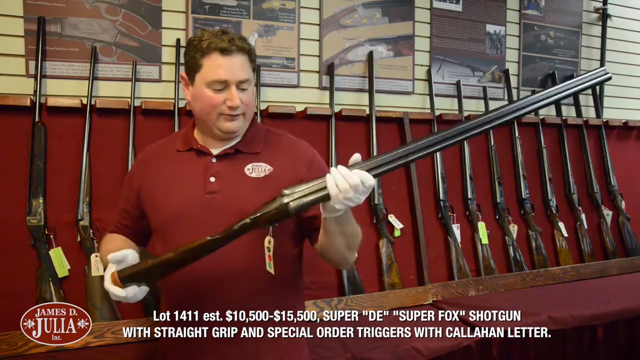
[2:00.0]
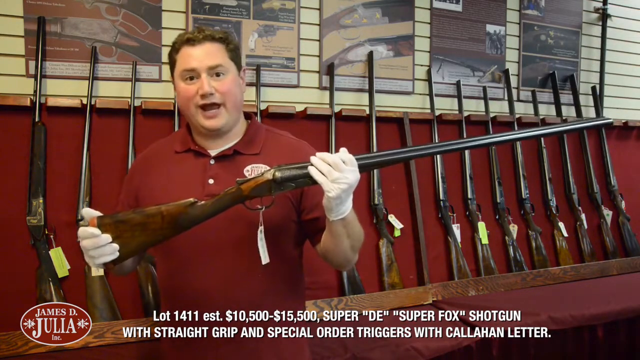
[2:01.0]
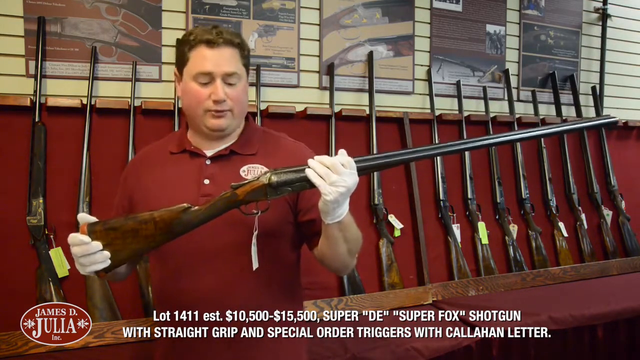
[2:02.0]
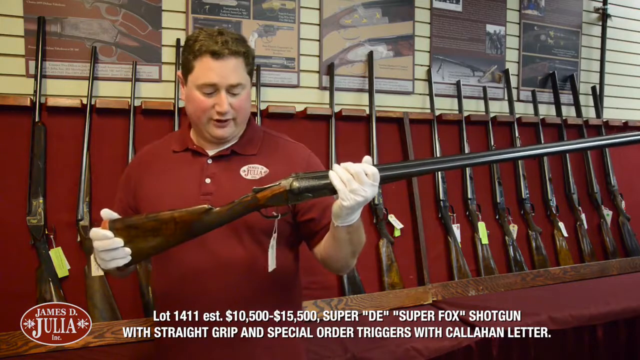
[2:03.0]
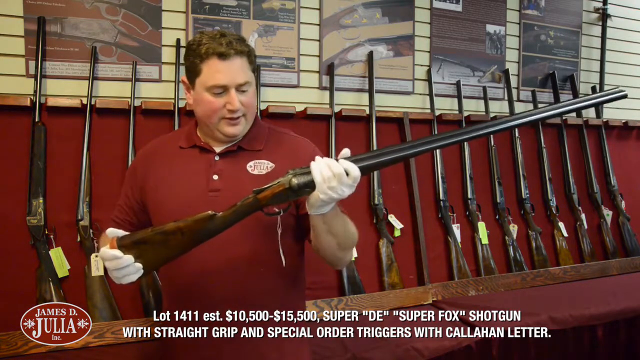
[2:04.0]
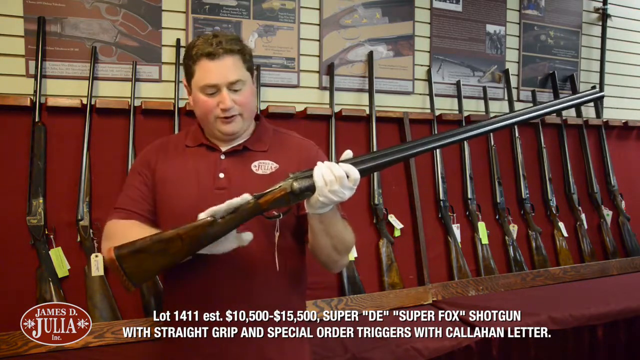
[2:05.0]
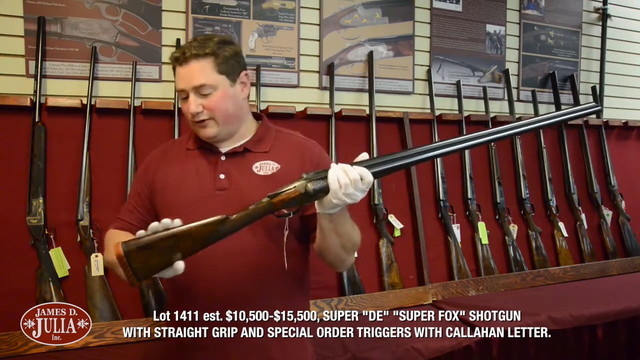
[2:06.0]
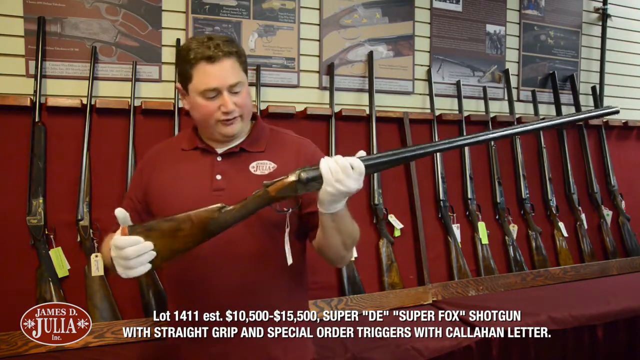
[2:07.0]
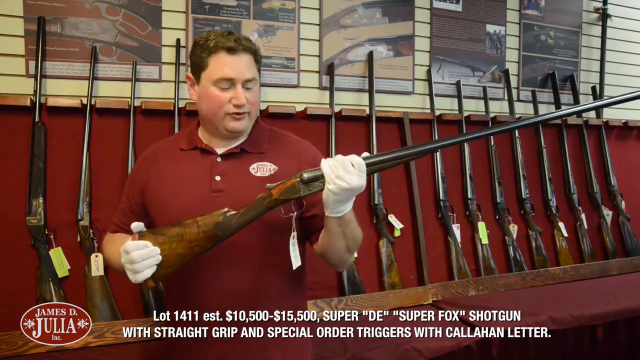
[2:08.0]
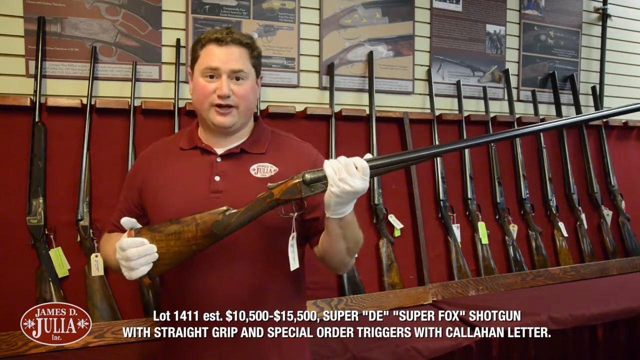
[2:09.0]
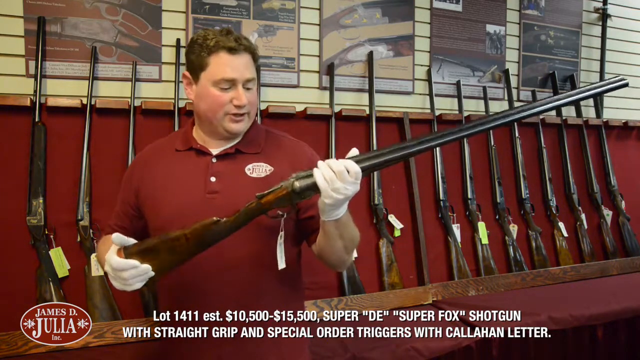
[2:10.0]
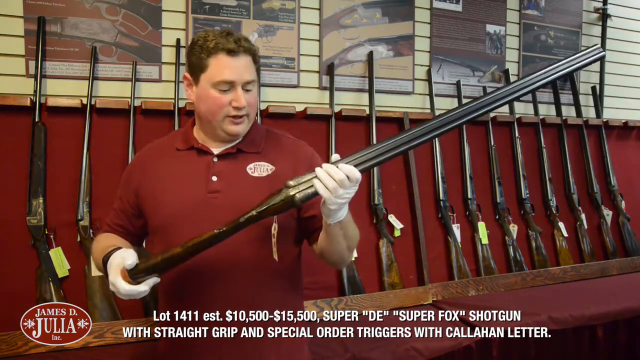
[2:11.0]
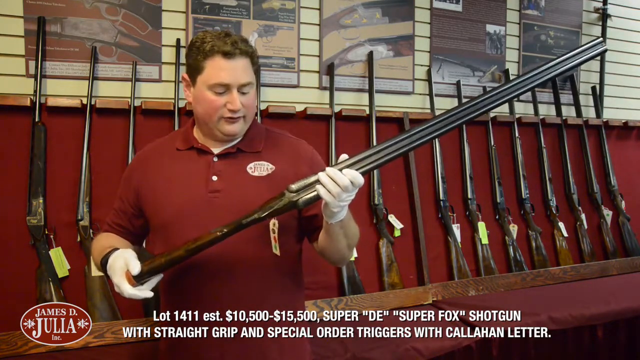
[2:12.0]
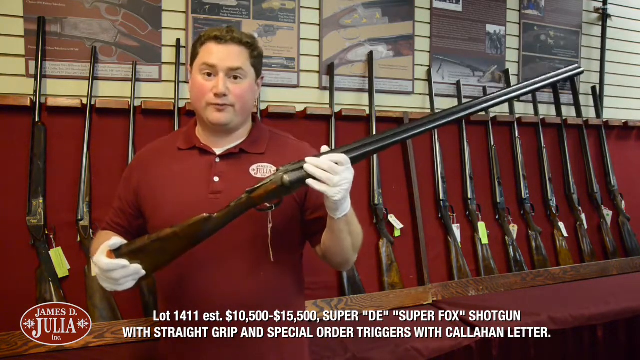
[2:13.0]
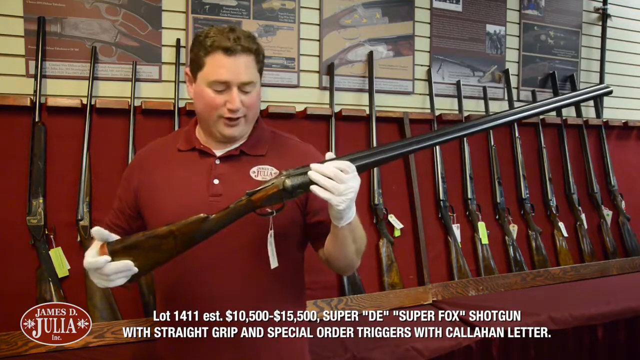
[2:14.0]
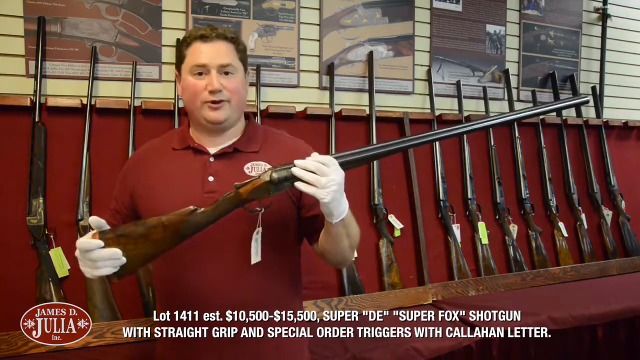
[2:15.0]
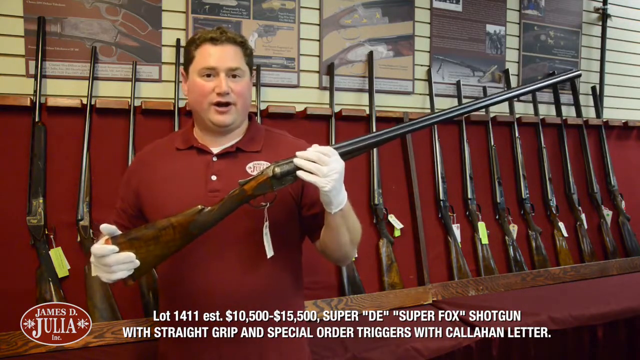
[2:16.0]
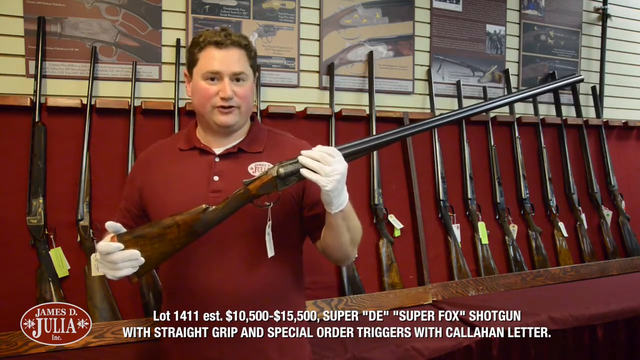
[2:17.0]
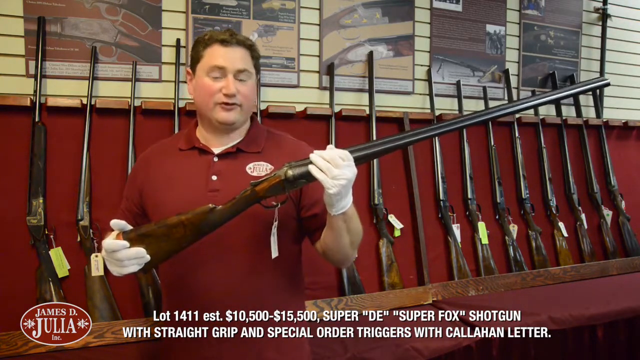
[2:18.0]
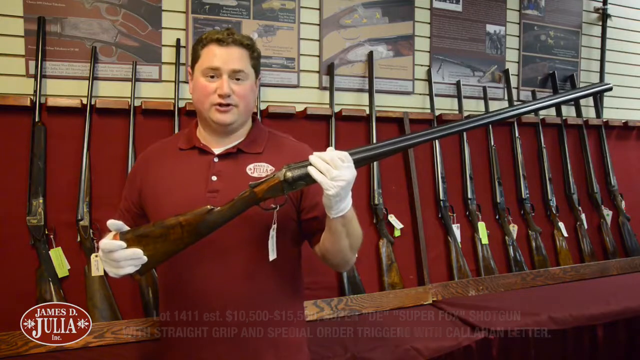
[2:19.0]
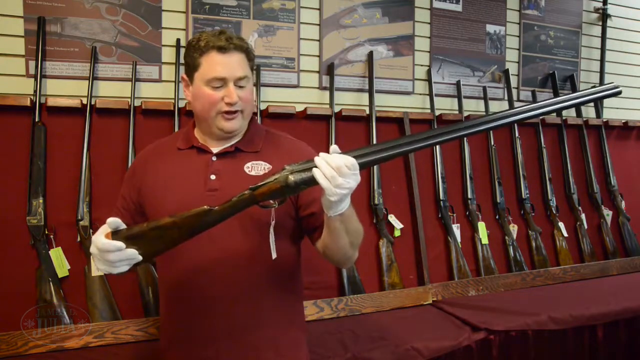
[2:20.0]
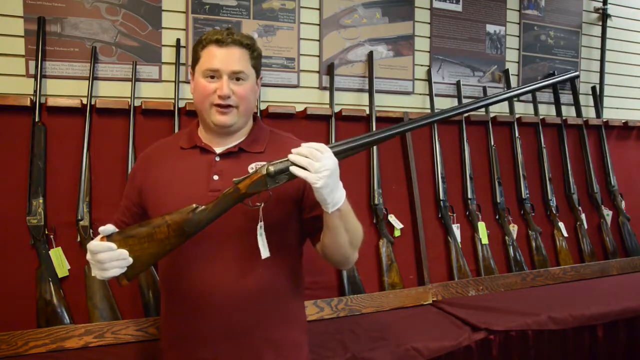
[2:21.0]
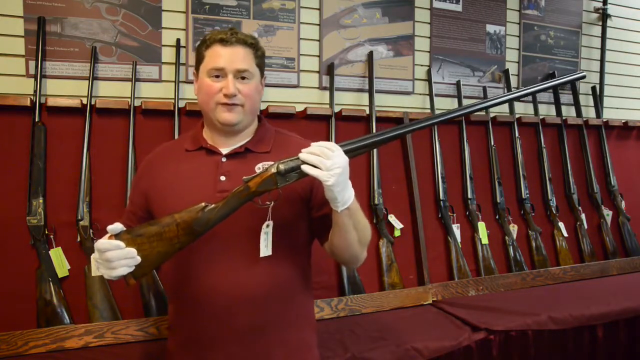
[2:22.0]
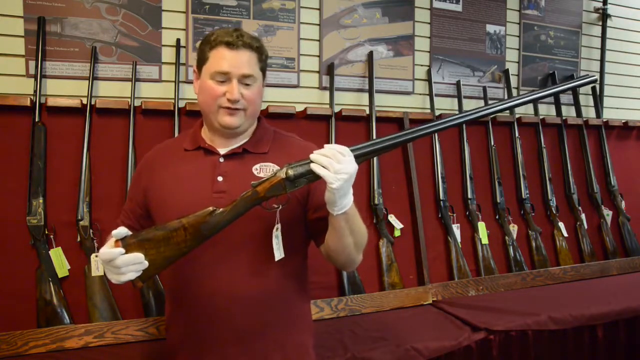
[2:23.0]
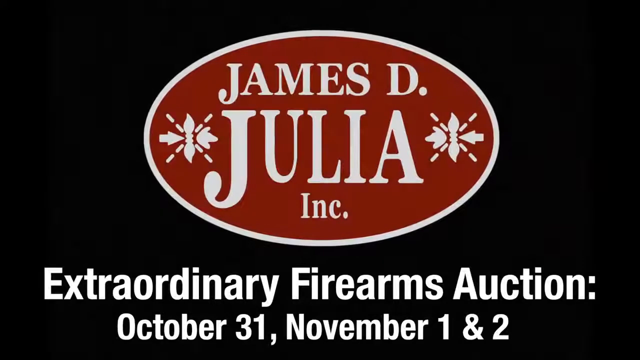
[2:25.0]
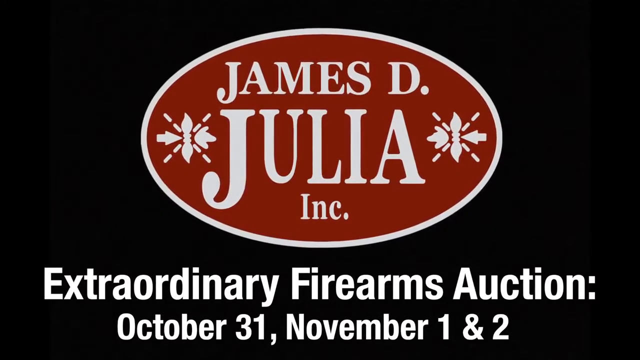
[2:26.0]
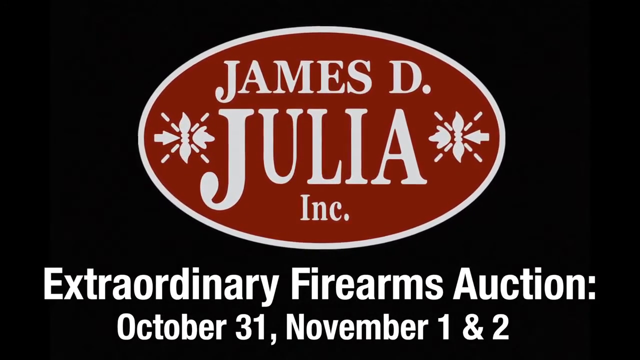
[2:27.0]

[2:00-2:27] The man inside the shop holds the rifle in both hands, going from tilting the side of the gun toward the camera to holding the gun upright in both hands. He goes from looking down at the rifle to looking at the camera and saying something directly to it. He looks down at the side of the rifle again and moves his leading hand, his left hand, down the barrel to the center of the gun, then rubs the inside of the wood part of the gun with his right hand, kind of forward and back, and rests his hand on the back of the gun. He turns the gun upright toward the camera, looks at the camera again, and states something most likely about the base of the gun. He looks down at the gun, turns it on its side again, and then looks up at the camera, possibly saying something about the design on the side of the gun. He repeats this a couple more times, looking down at the gun and up at the camera multiple times.